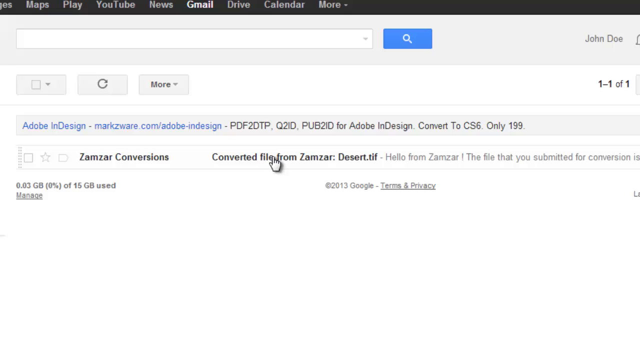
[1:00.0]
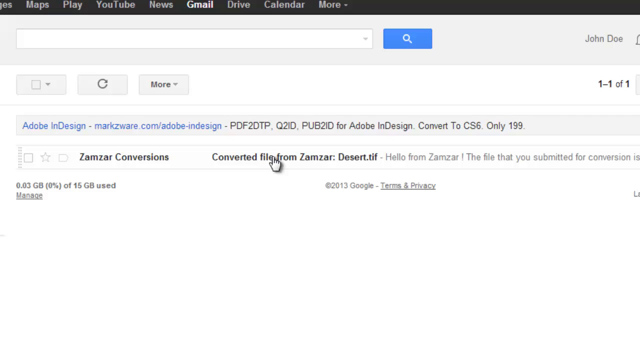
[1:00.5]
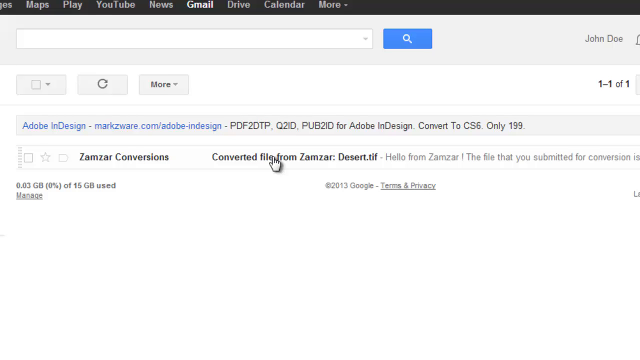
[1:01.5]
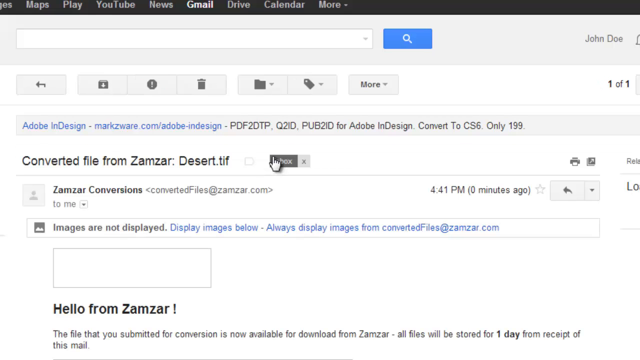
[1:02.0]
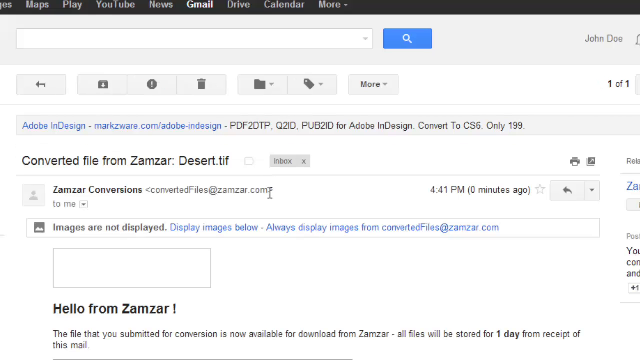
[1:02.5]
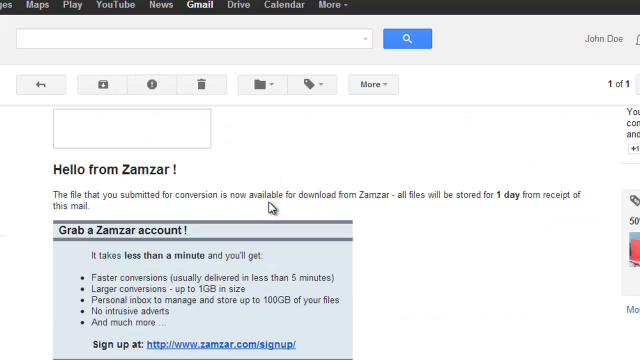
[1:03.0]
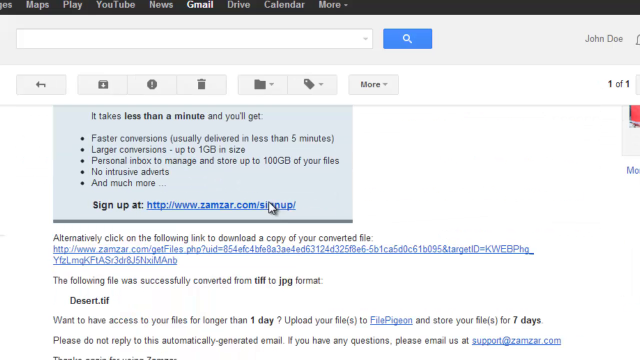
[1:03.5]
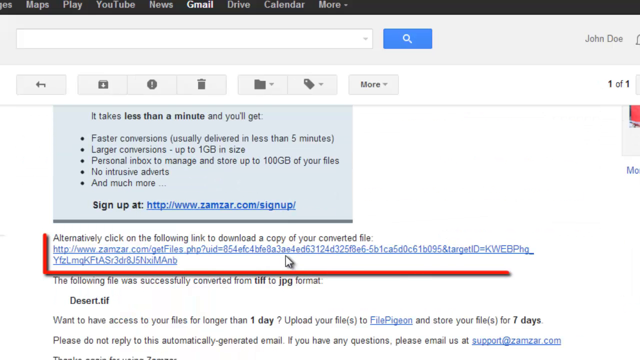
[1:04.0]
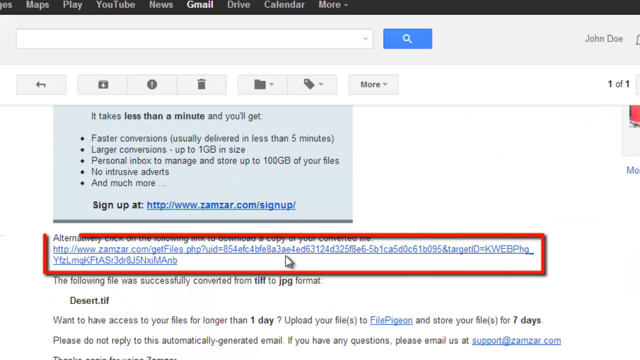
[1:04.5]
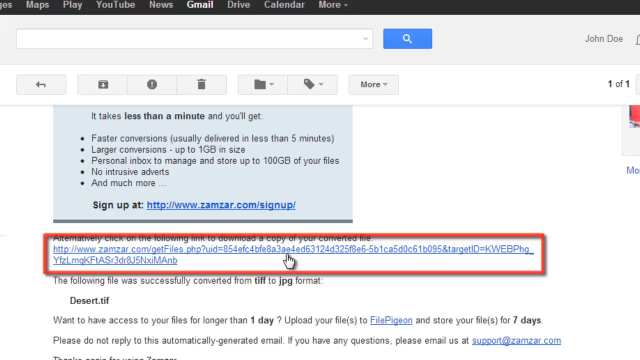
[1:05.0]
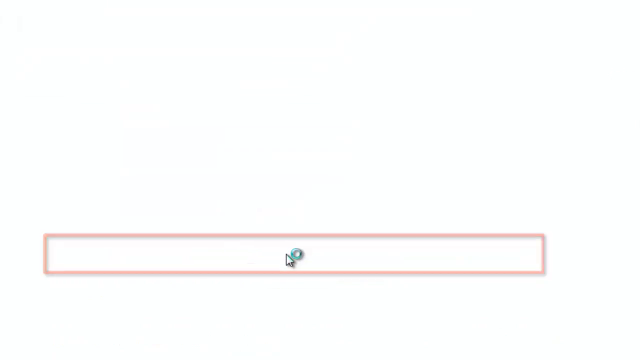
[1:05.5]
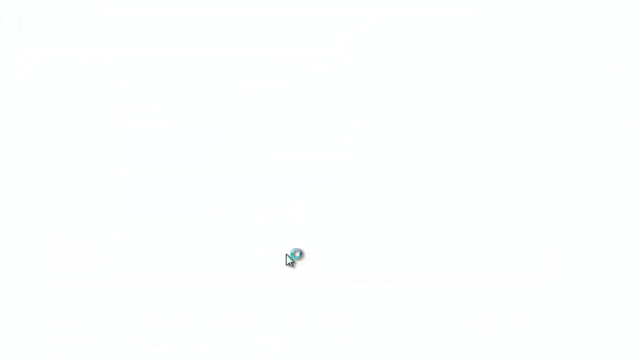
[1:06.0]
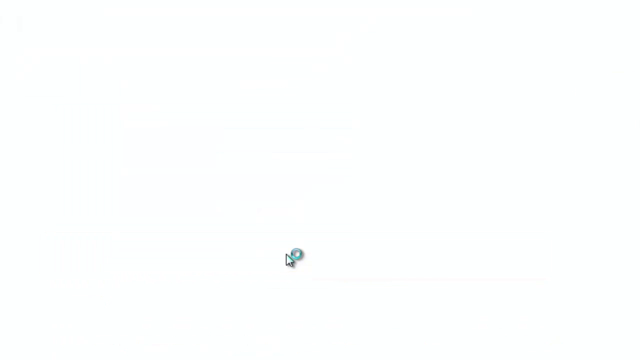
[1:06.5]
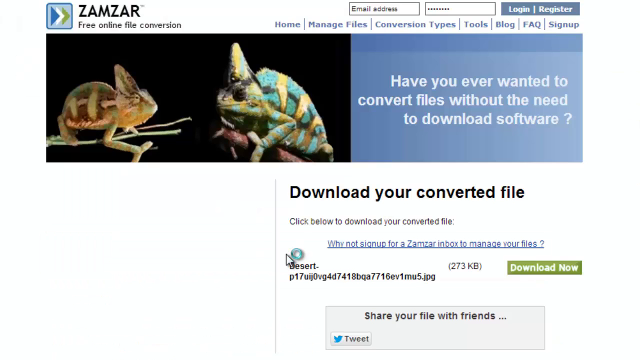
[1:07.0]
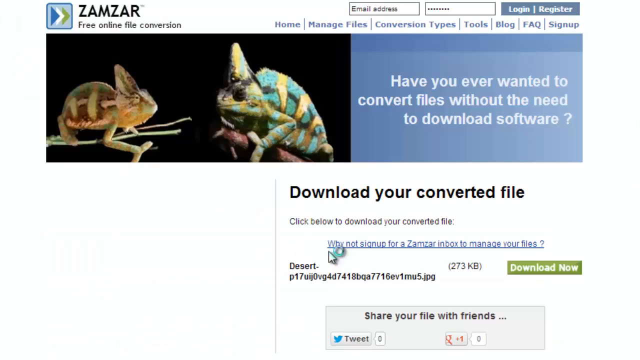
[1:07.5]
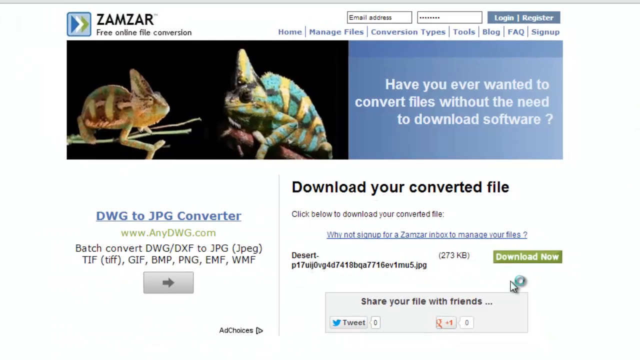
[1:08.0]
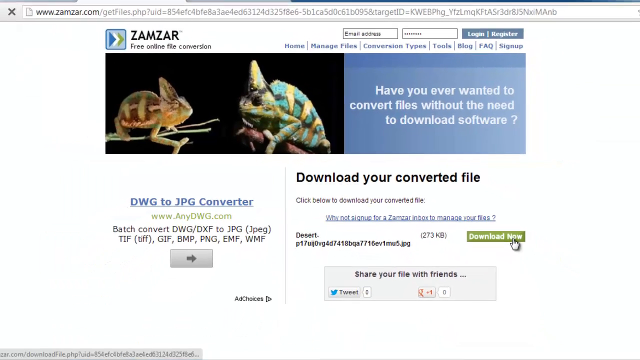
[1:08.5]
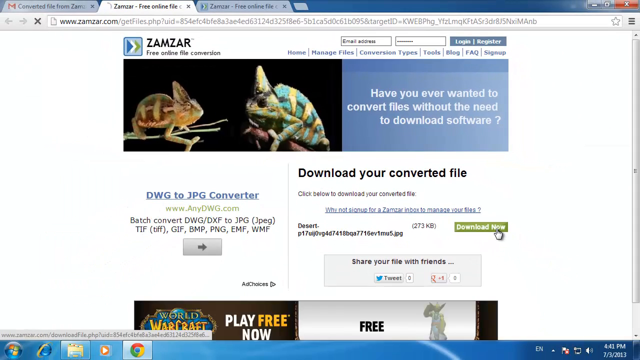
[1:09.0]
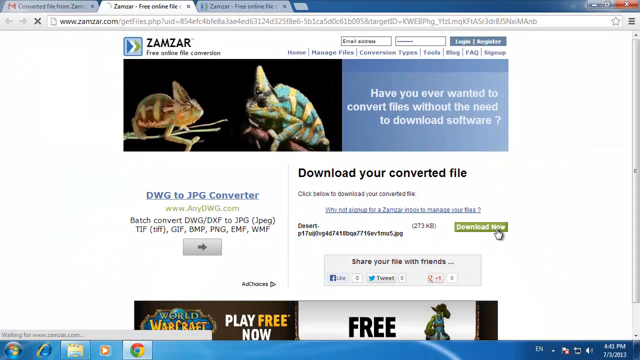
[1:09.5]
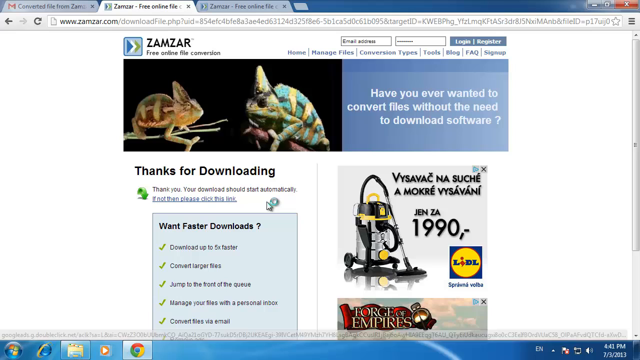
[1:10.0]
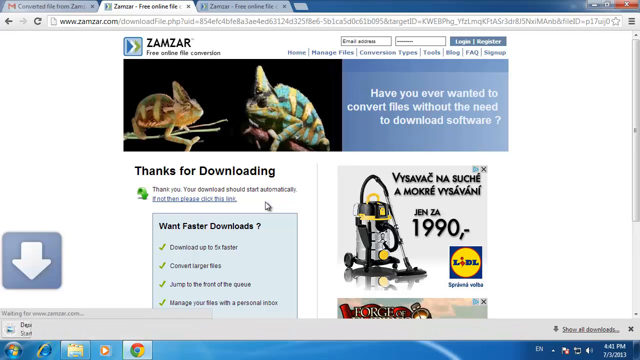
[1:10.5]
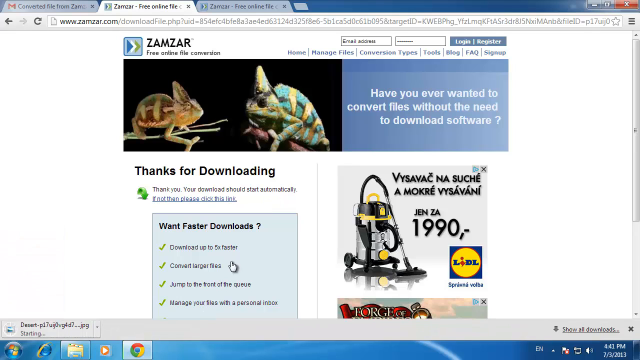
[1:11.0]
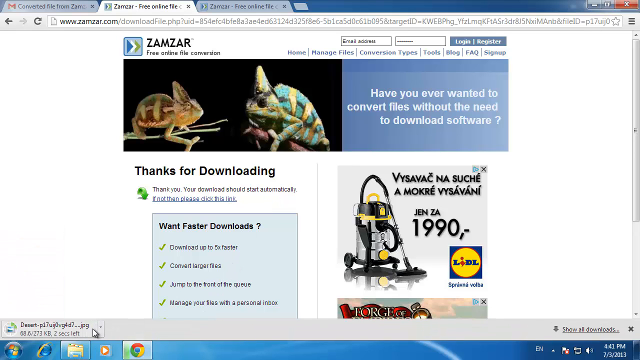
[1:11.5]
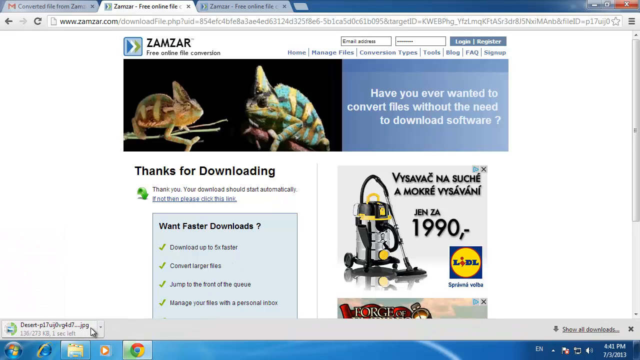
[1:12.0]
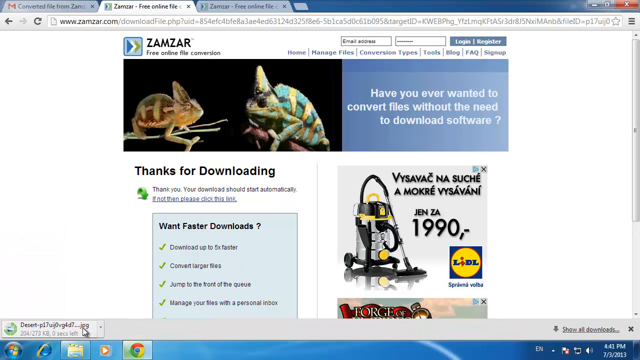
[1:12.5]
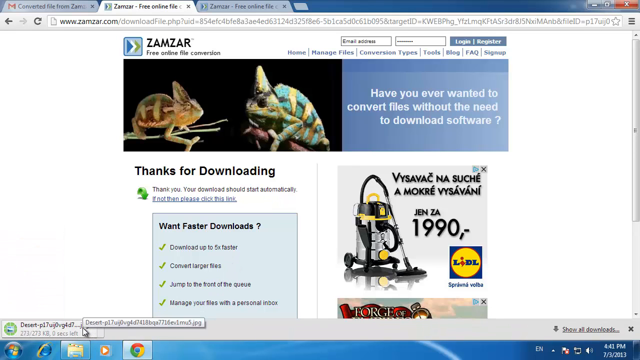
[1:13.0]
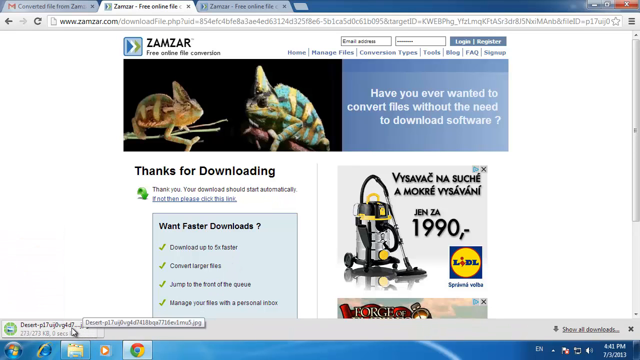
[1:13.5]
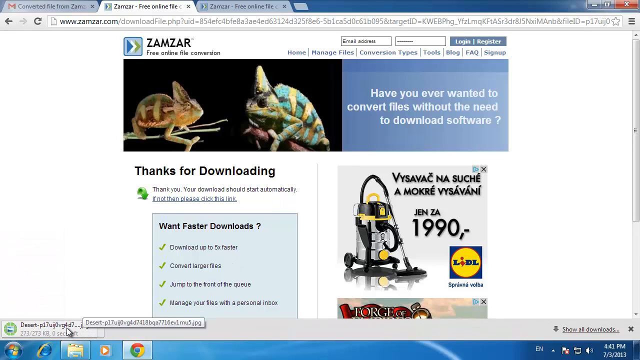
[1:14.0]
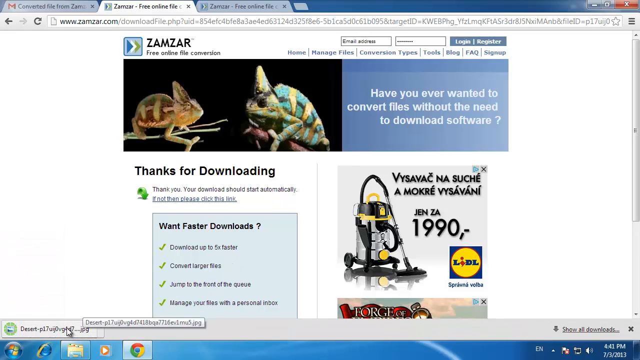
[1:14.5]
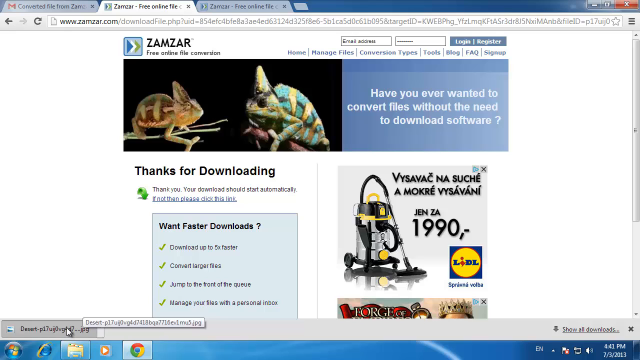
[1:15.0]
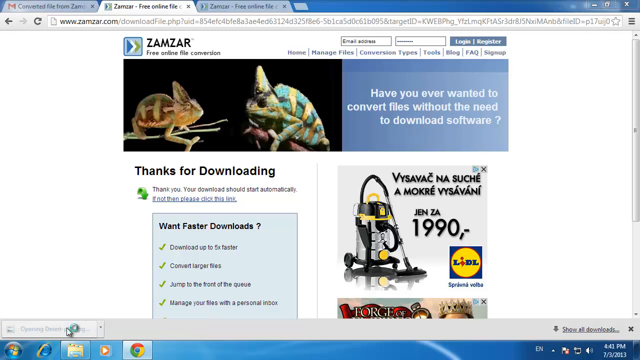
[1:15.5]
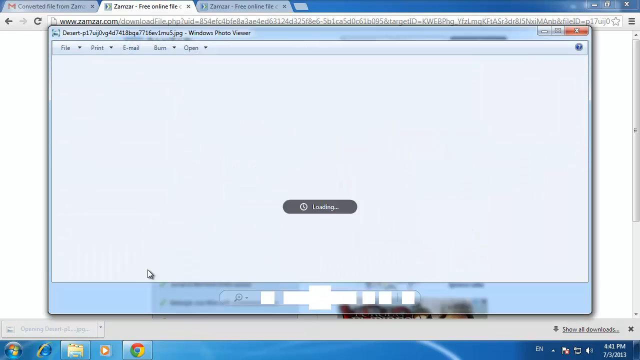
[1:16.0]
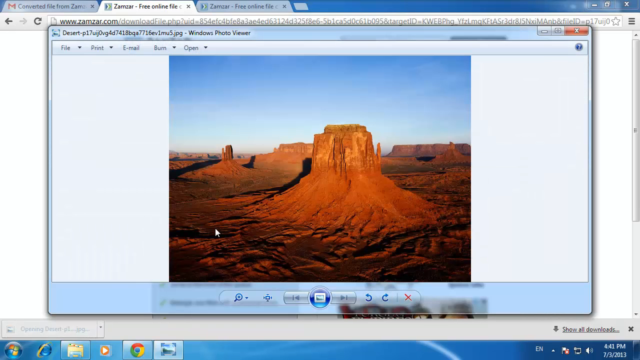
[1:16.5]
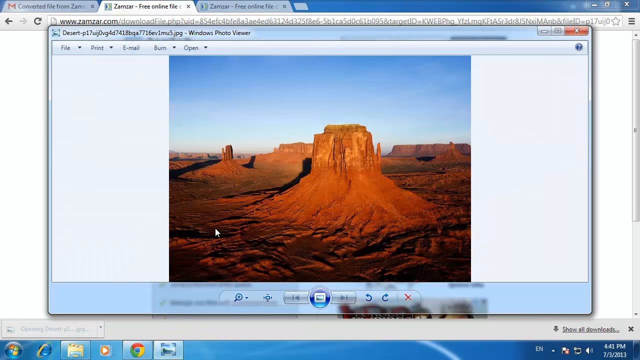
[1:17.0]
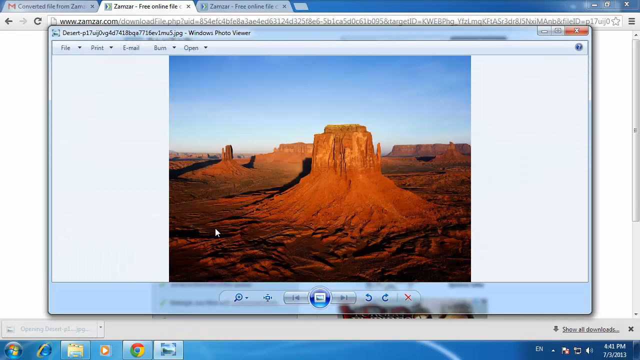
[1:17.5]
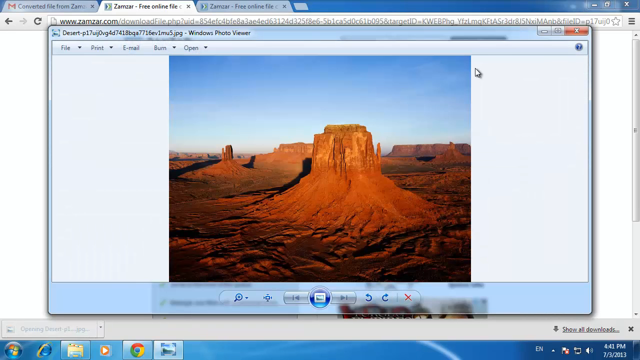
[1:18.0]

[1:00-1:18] There appears to be some kind of link in the email, which is clicked to go back to the website, and the person finally gets their picture.